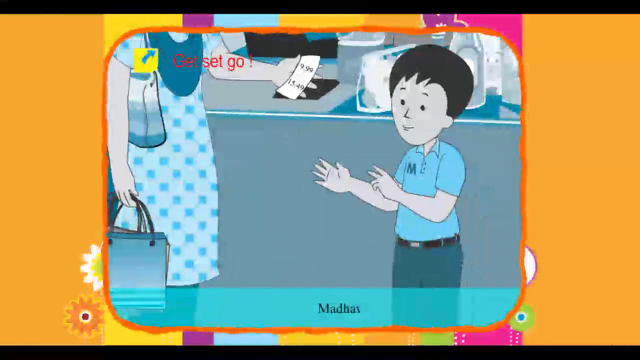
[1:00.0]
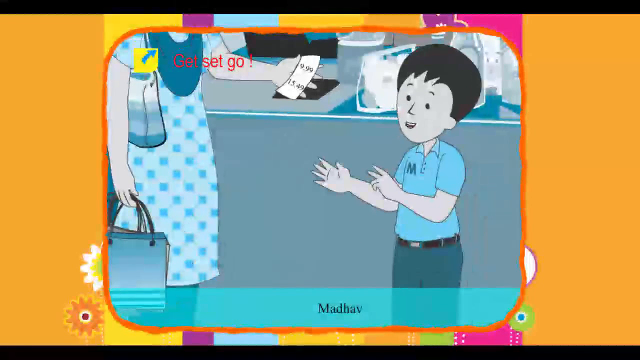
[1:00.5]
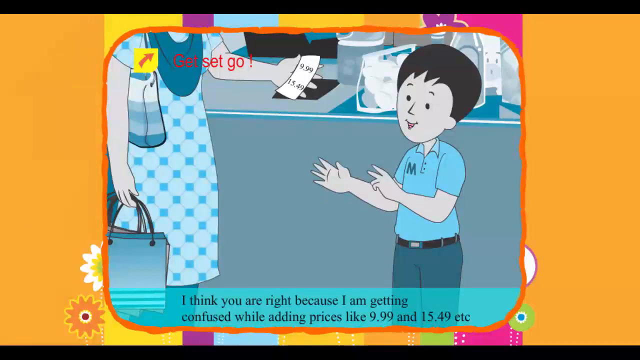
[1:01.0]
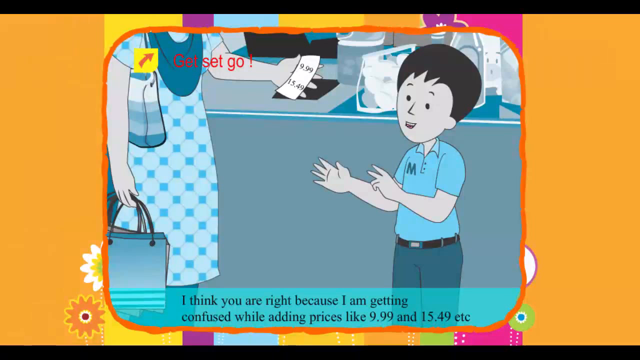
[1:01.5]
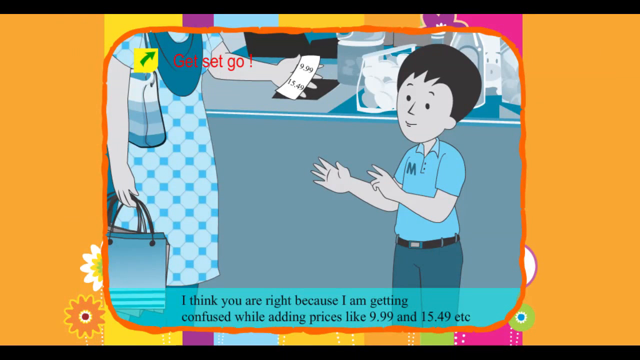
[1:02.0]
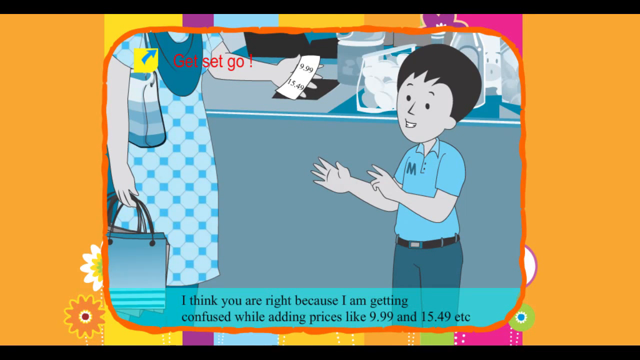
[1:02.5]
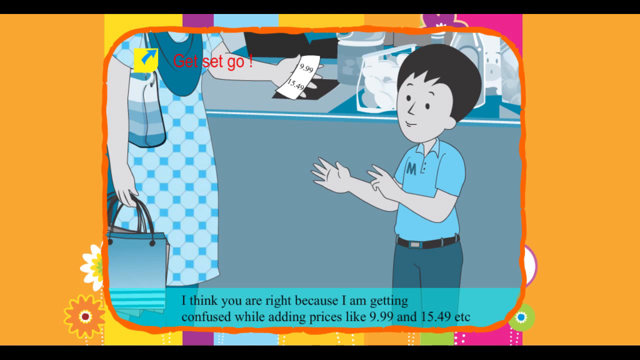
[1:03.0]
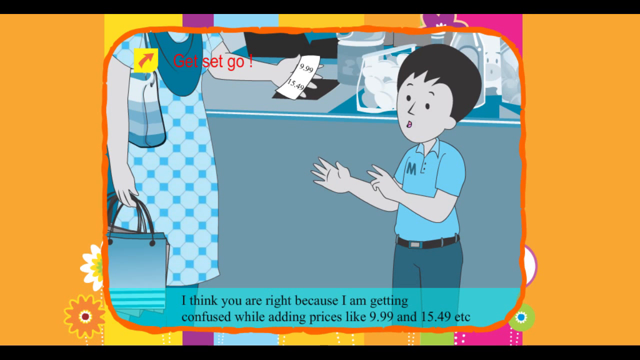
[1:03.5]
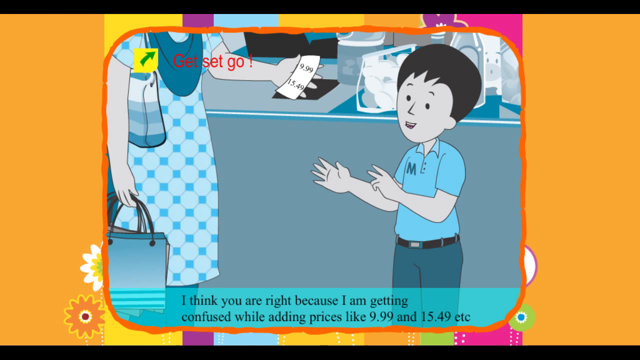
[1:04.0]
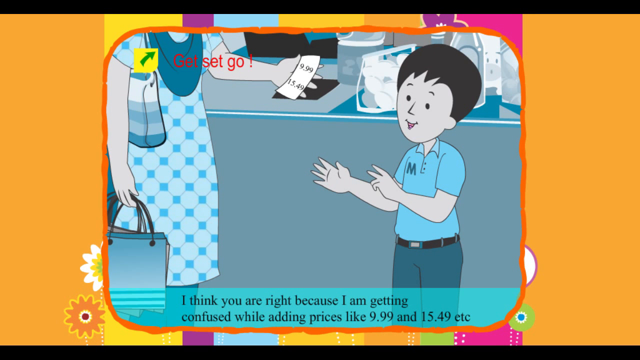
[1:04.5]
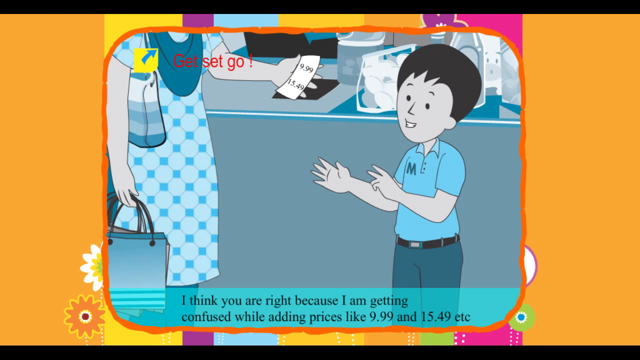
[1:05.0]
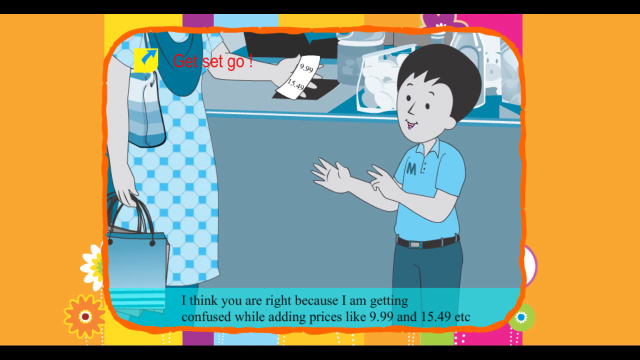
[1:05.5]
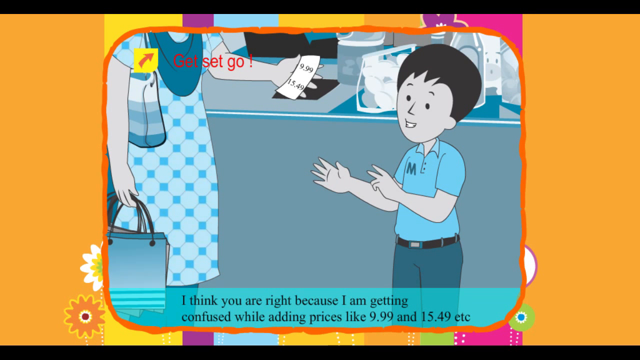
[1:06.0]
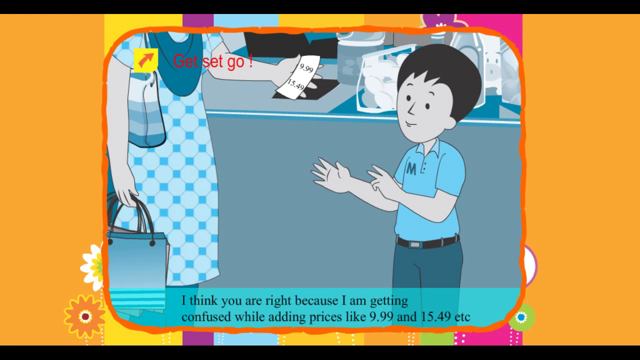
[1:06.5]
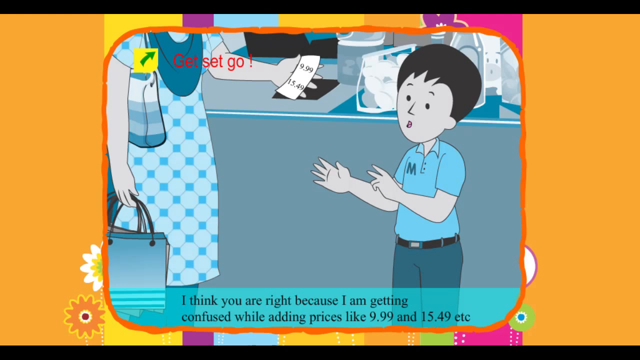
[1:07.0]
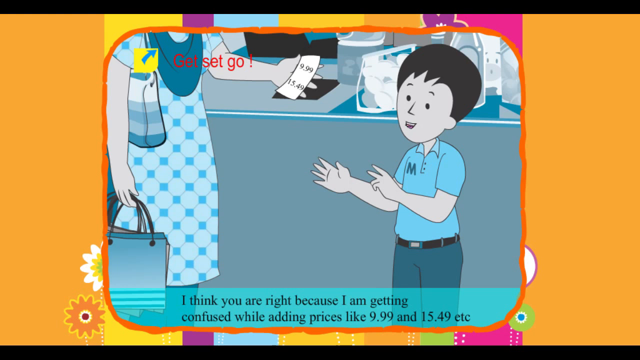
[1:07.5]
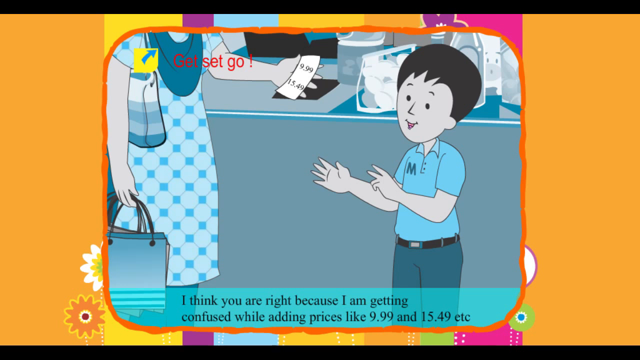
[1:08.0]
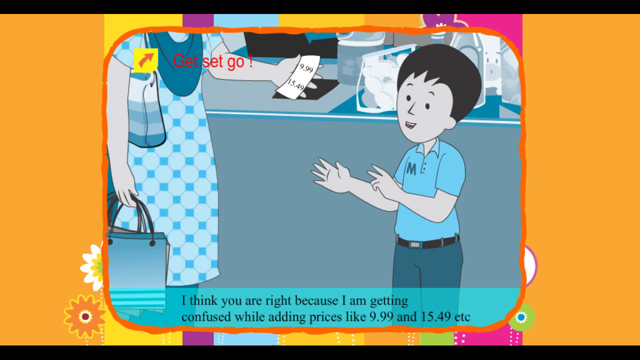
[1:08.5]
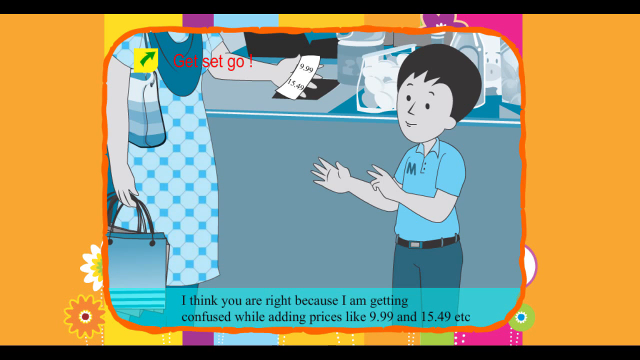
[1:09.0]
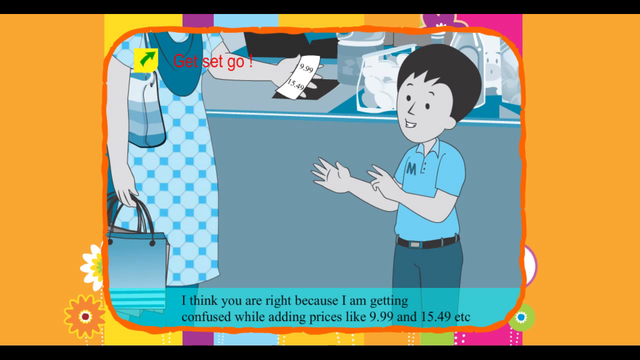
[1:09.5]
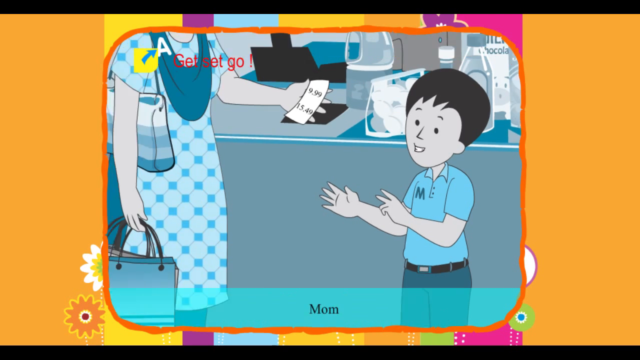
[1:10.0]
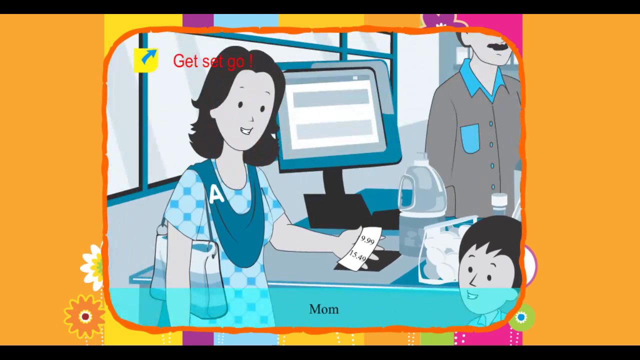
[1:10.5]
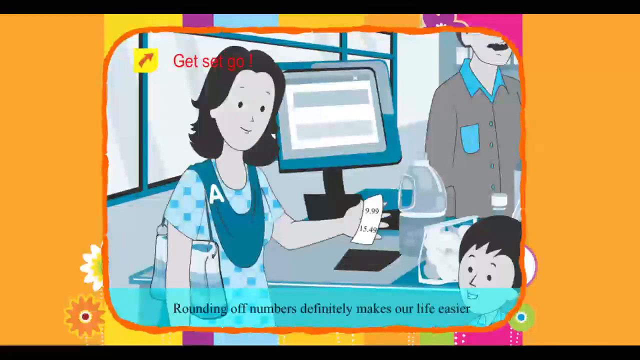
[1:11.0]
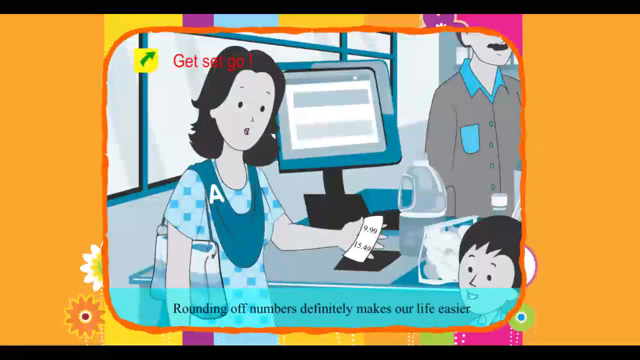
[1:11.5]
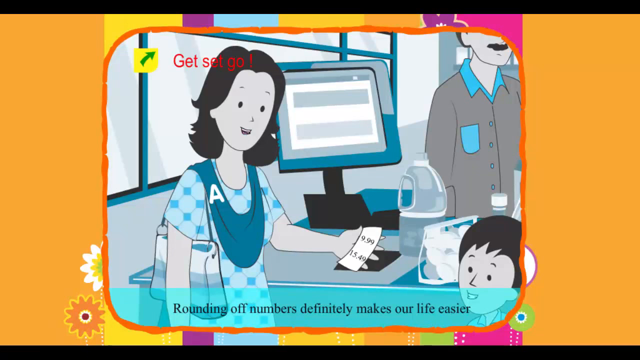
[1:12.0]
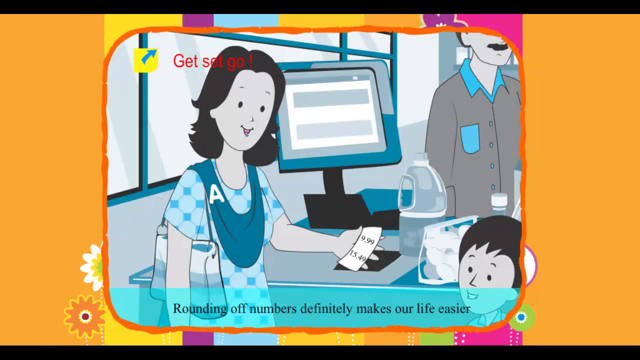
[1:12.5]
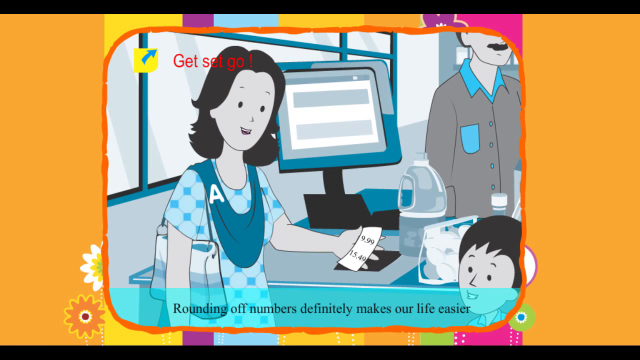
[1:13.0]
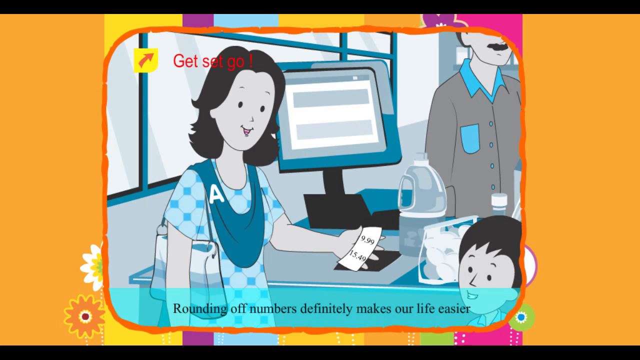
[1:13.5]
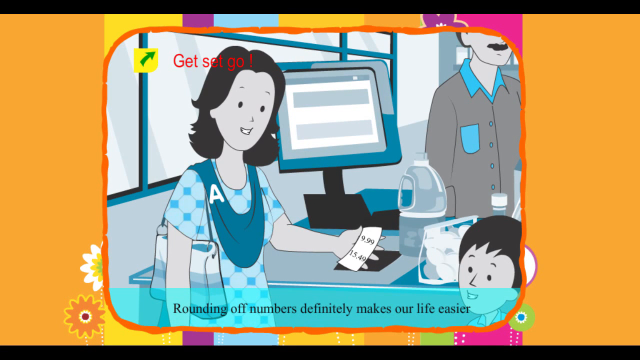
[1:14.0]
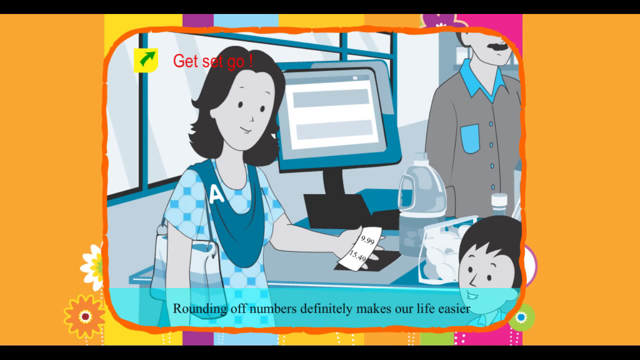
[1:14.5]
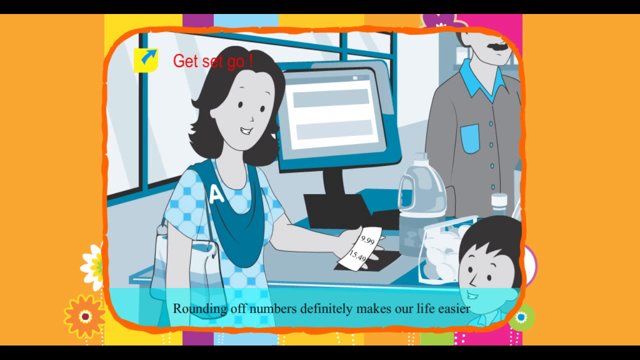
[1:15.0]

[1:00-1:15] The little boy, with an M on his blue shirt, tries to calculate the totals on the slip the mother holds in her hands, and the mother advises her child on how to get the nearest whole number by rounding off the total. A short shot shows Madhav speaking and smiling as he says, "I think you are right because I'm getting confused, I'm adding prices like 999 1549 etc." He continues speaking to his mom. The scene then goes to the mom, who says that rounding off numbers definitely makes our life easier, in a short shot that focuses on her while showing the boy's face.